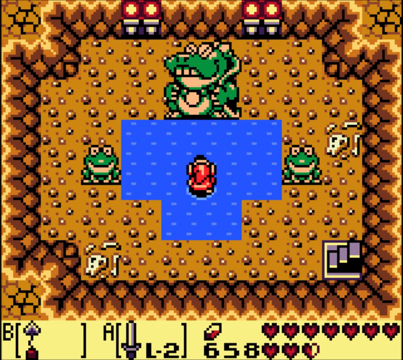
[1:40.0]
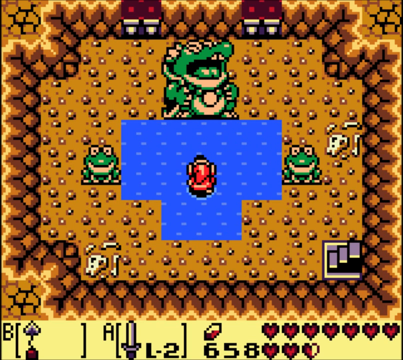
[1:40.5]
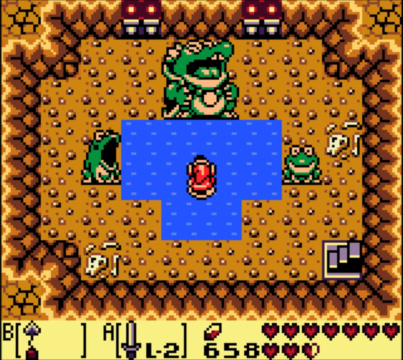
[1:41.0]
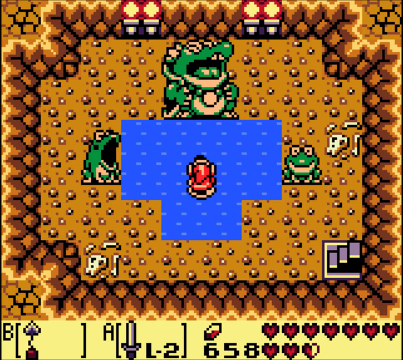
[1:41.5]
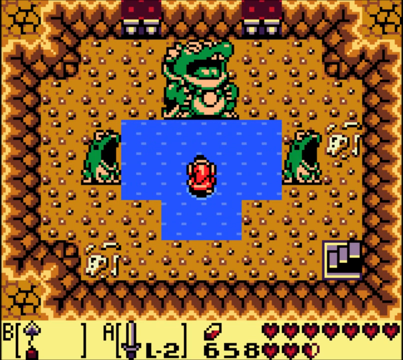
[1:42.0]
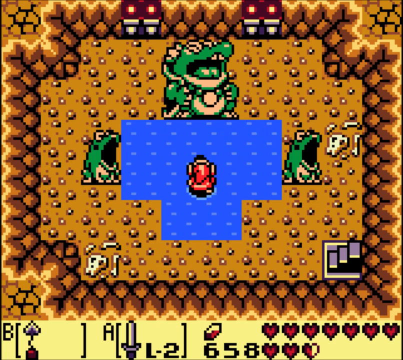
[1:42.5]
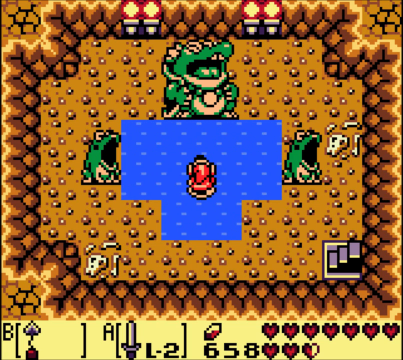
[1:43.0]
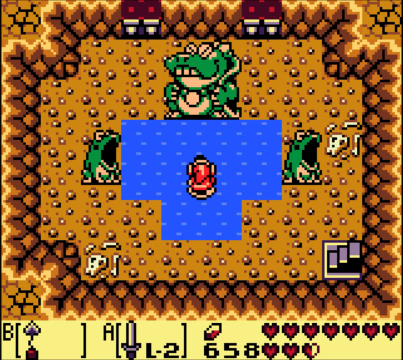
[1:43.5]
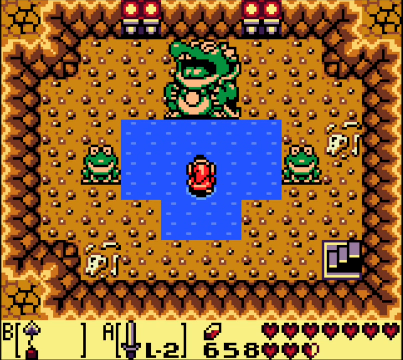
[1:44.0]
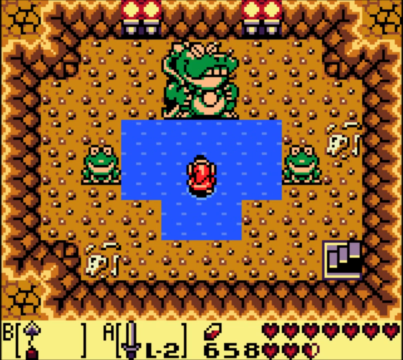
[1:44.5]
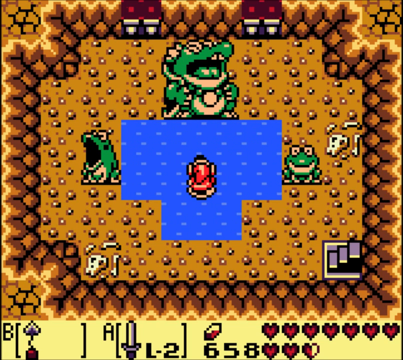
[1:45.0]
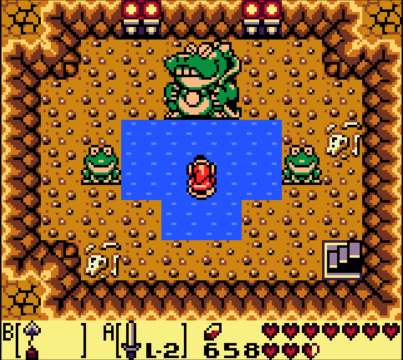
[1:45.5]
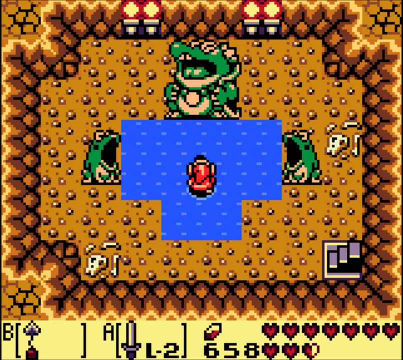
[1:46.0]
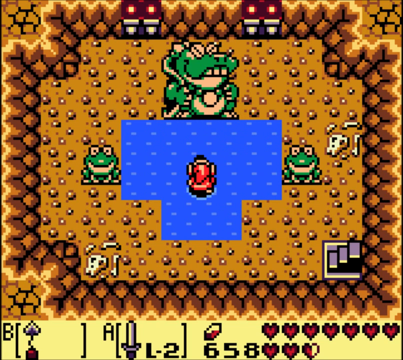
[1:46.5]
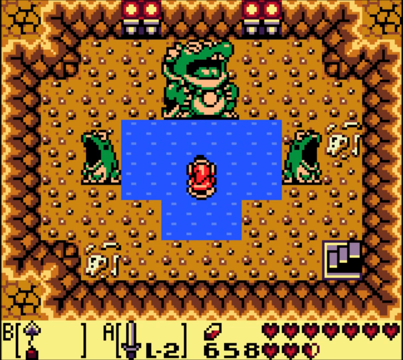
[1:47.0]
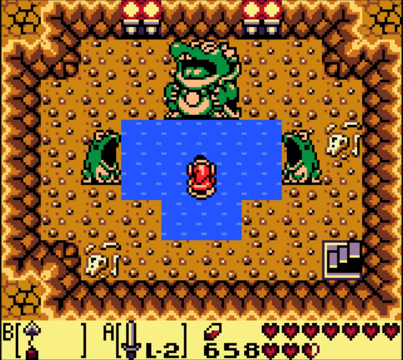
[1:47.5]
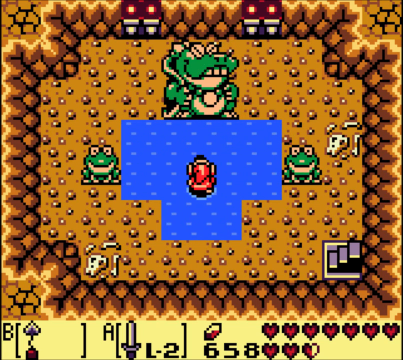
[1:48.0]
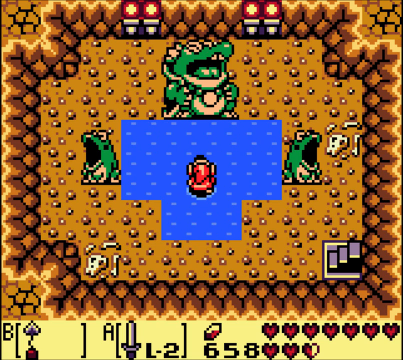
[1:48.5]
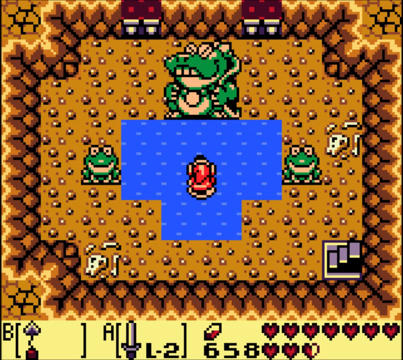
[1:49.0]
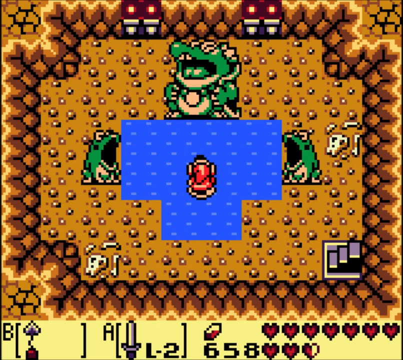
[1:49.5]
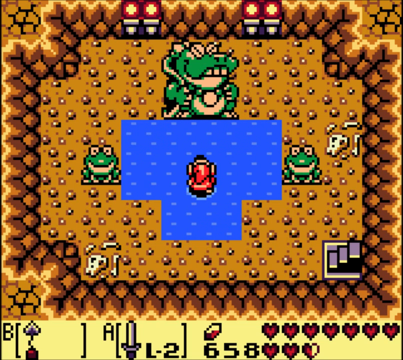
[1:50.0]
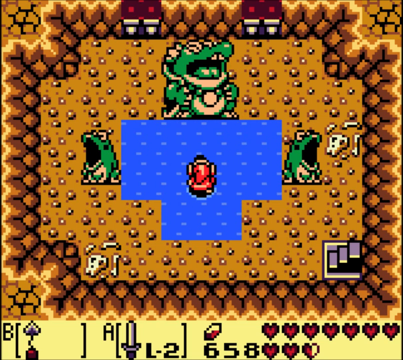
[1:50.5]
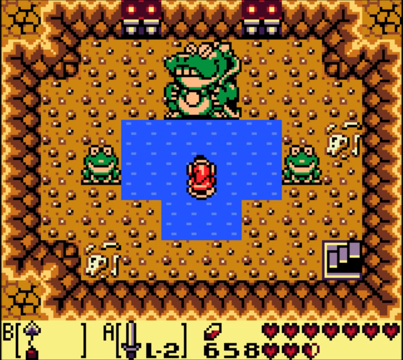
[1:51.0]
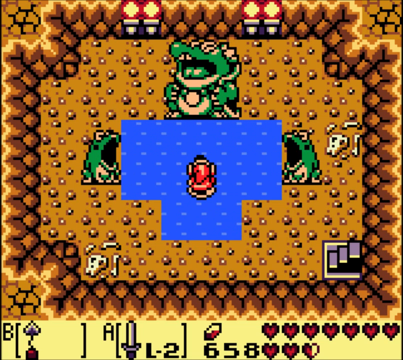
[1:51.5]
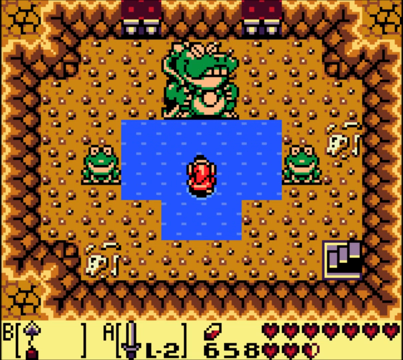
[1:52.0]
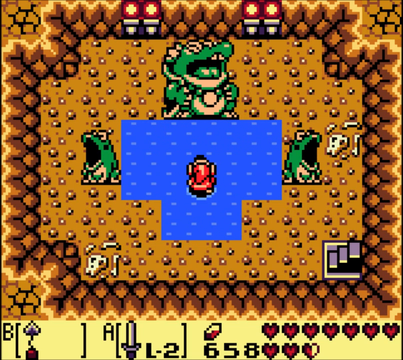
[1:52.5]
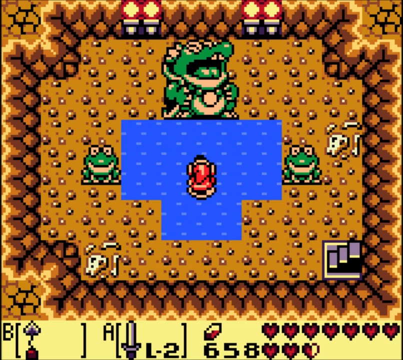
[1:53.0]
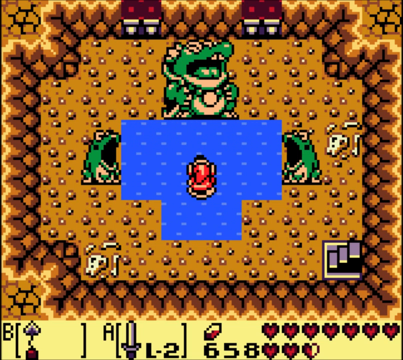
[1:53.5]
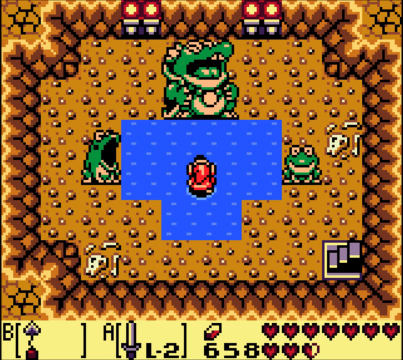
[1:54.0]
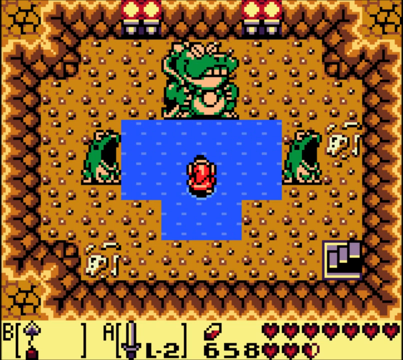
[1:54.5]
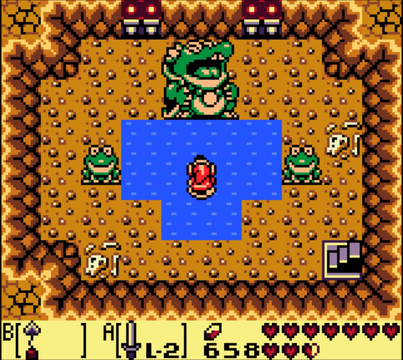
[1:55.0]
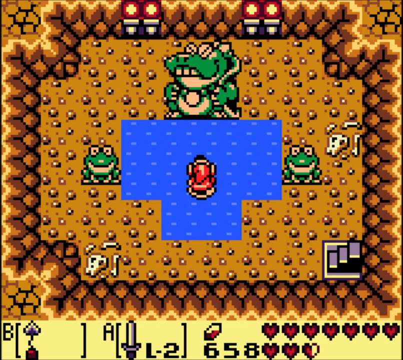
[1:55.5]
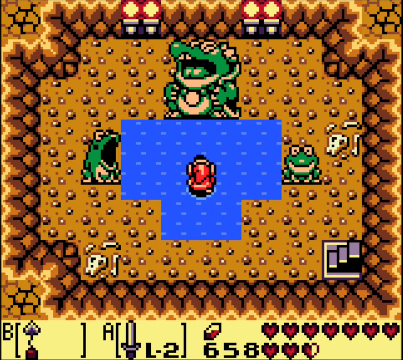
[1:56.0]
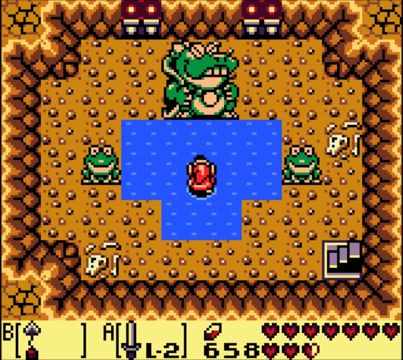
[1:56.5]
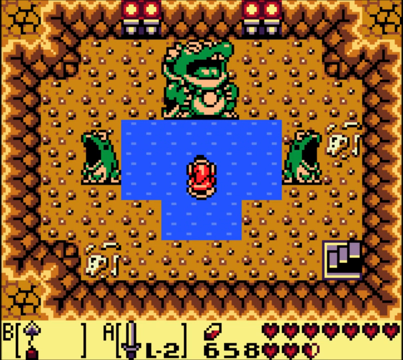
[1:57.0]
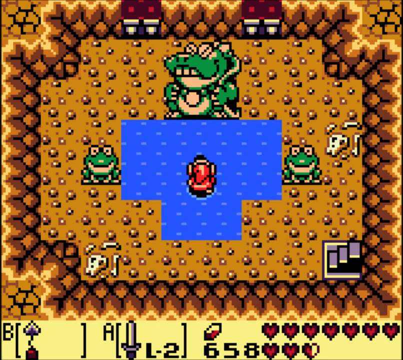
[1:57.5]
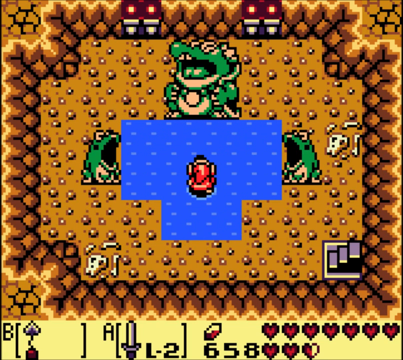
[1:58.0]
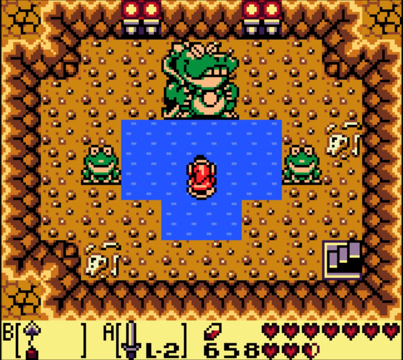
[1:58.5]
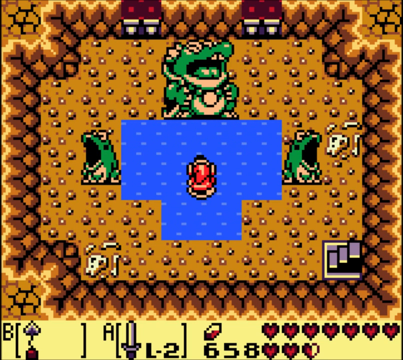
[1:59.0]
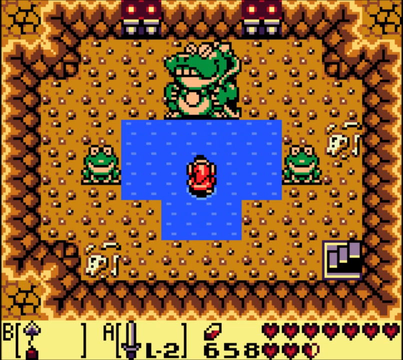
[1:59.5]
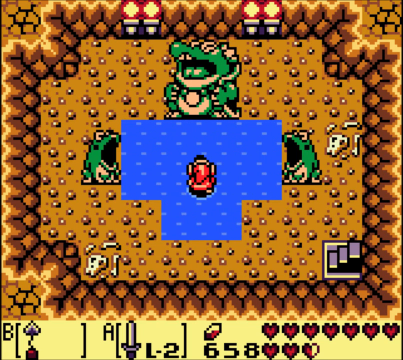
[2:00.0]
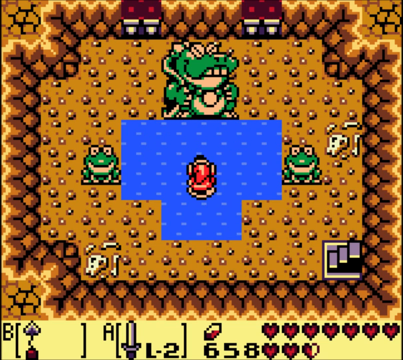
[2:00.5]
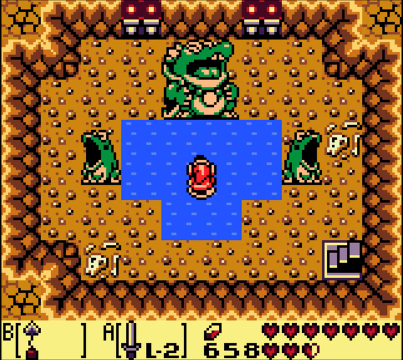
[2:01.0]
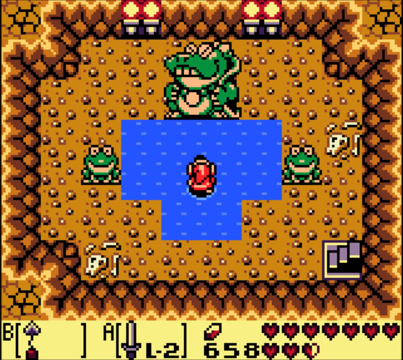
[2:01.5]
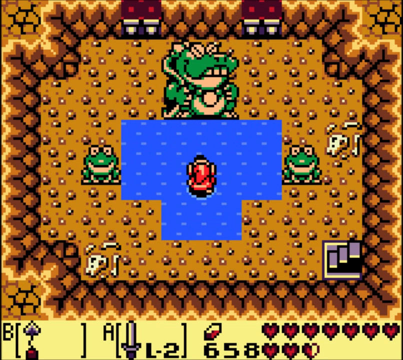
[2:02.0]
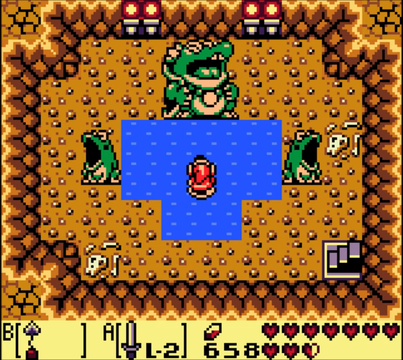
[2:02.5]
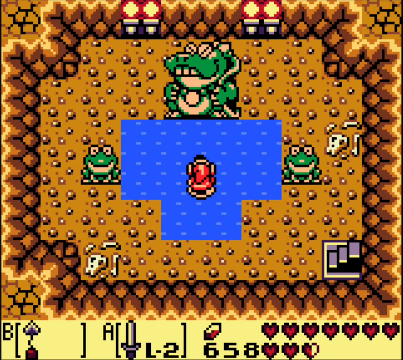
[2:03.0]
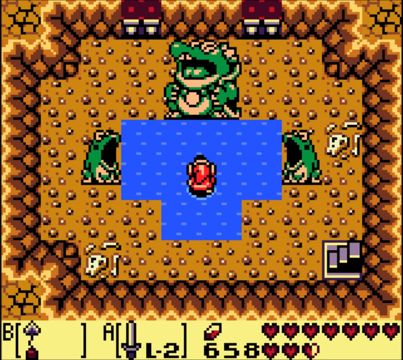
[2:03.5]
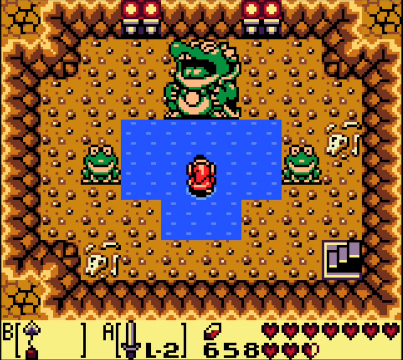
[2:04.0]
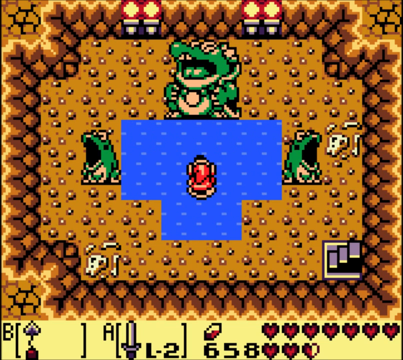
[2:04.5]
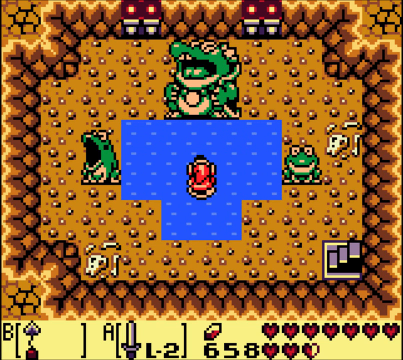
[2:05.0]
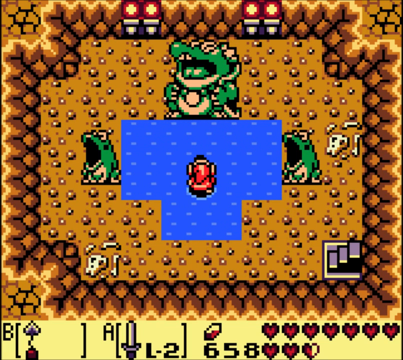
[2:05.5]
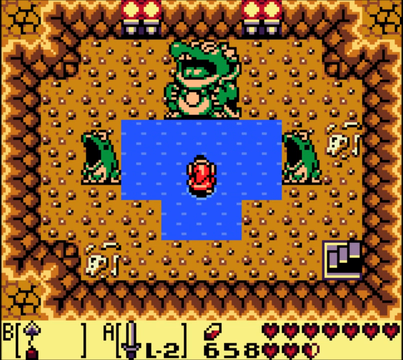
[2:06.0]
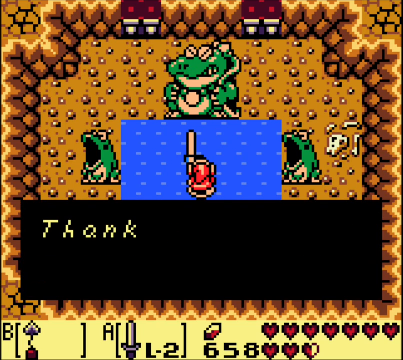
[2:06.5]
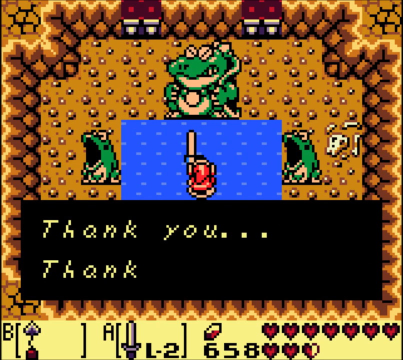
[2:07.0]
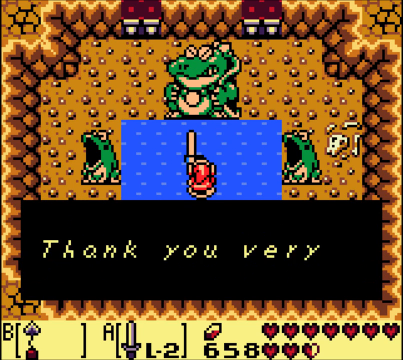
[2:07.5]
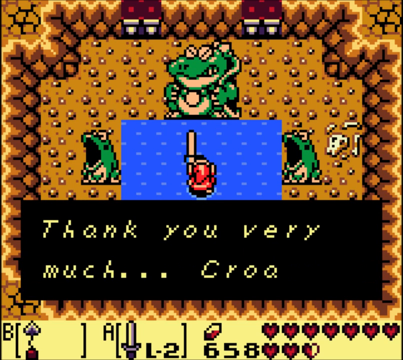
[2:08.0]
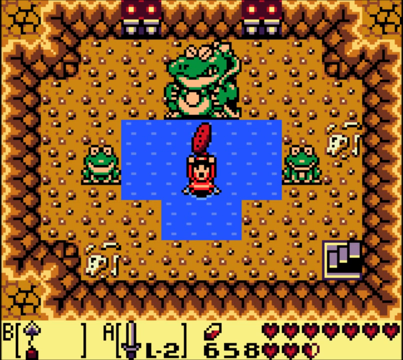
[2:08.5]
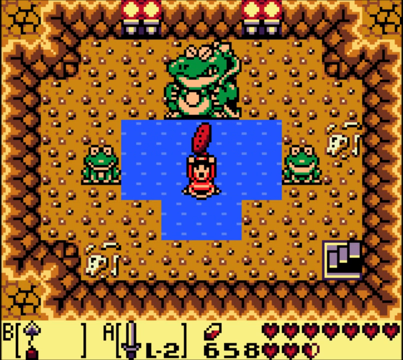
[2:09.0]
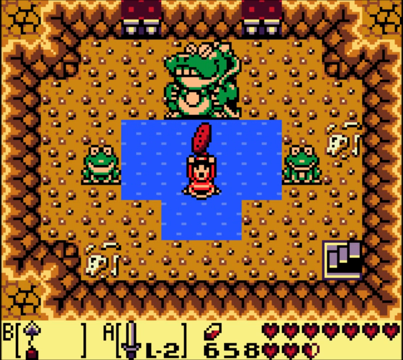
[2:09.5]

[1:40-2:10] The character is in the middle of the lake, speaking to the giant frog god. Behind the frog, in the wall, are two sets of two lights, one at the top left of the screen and one at the top right, glowing like disco lights. The frog god opens his mouth as if singing; the left-hand frog joins in first, followed by the right, until all three frogs are singing as the lights flash behind them. The red pixelated character stands in the middle of the lake, watching while water appears to move around him. At the end of the song, the frog god says, "thank you, thank you very much, croak." The character holds aloft in his hands a reward, a red oval that may be a slice of watermelon, with four dark dots running through its centre. He faces the camera with his hands aloft, his mouth wide open, and his eyes large and dark.